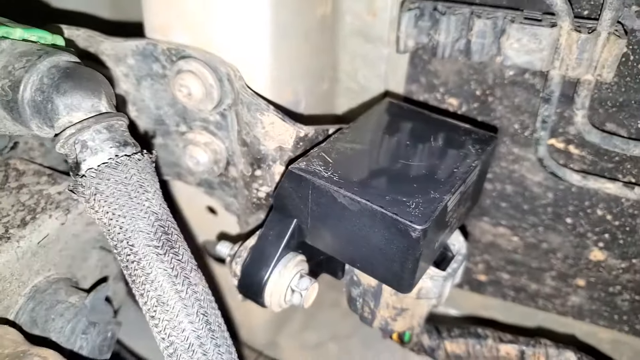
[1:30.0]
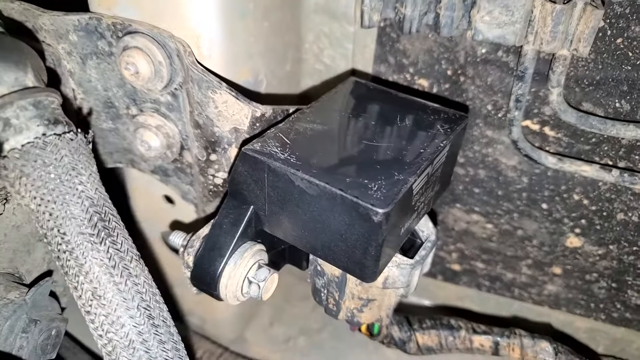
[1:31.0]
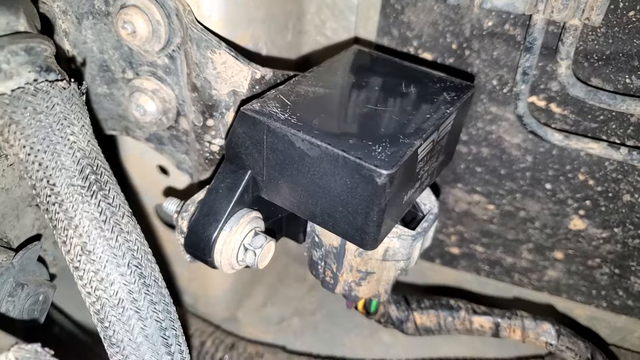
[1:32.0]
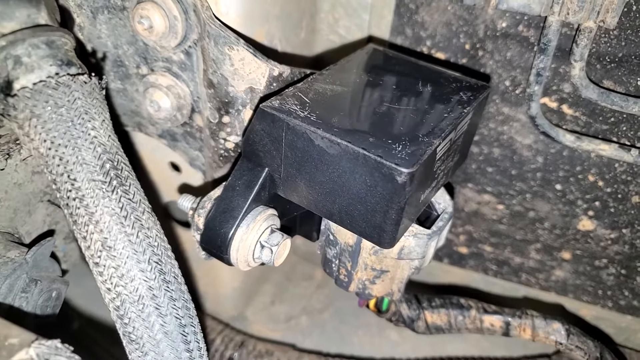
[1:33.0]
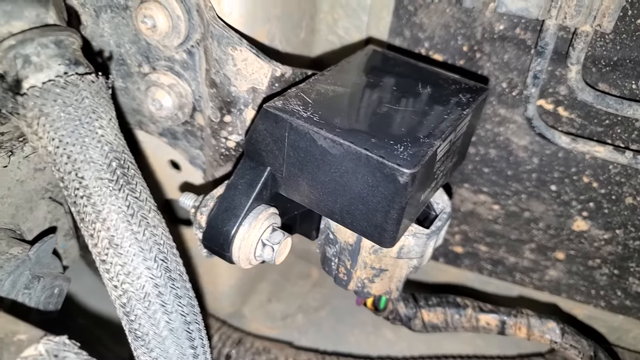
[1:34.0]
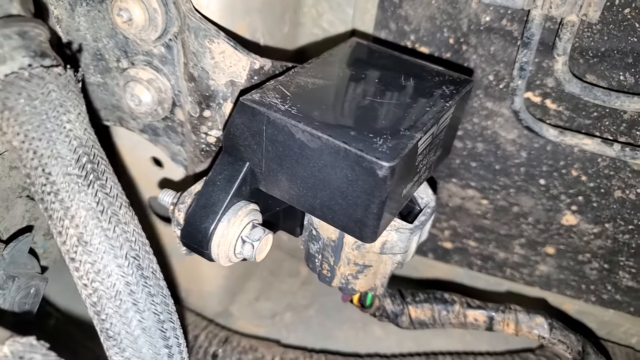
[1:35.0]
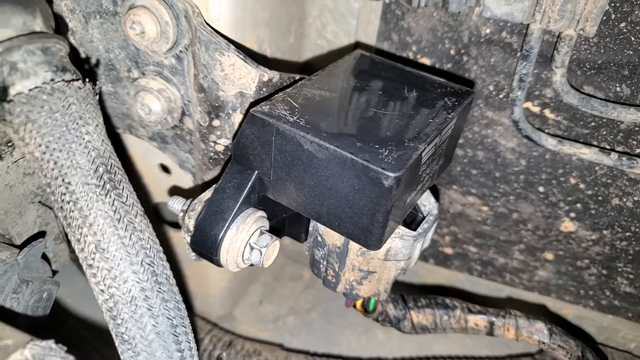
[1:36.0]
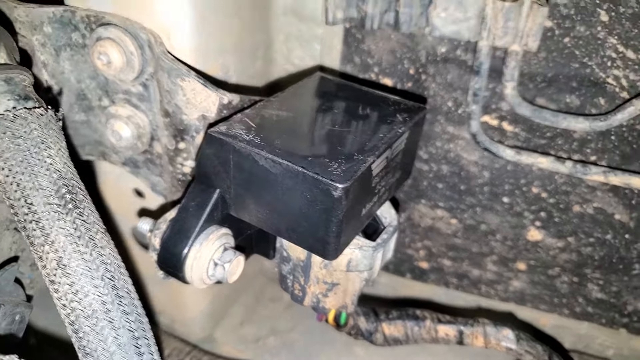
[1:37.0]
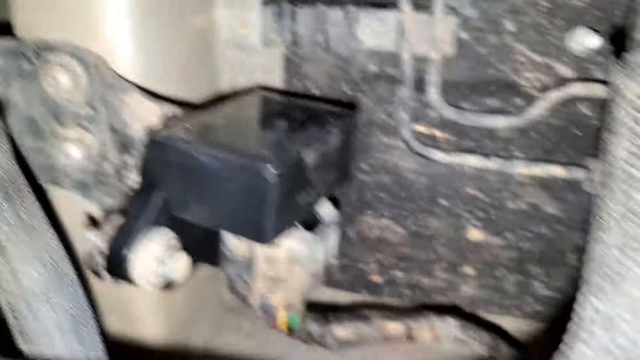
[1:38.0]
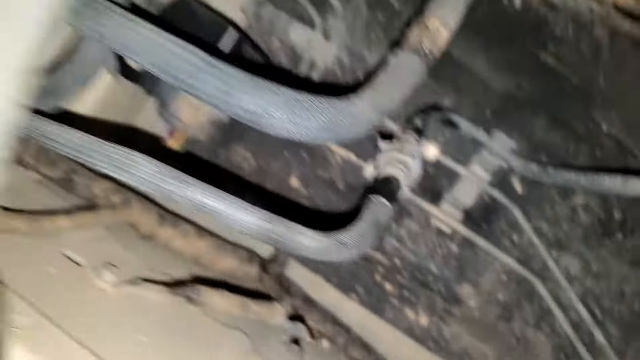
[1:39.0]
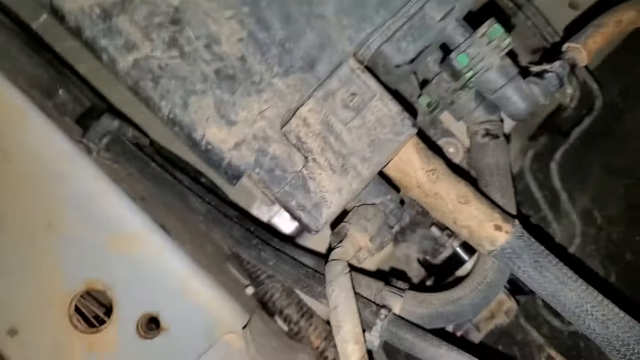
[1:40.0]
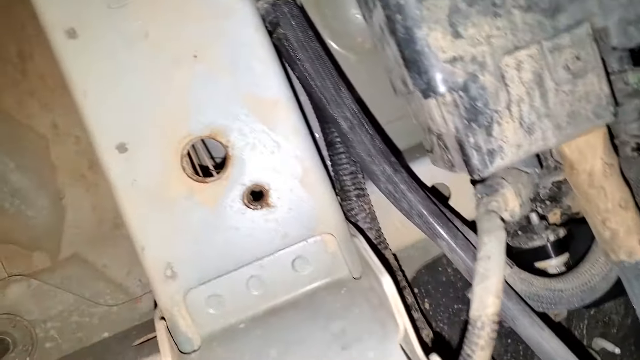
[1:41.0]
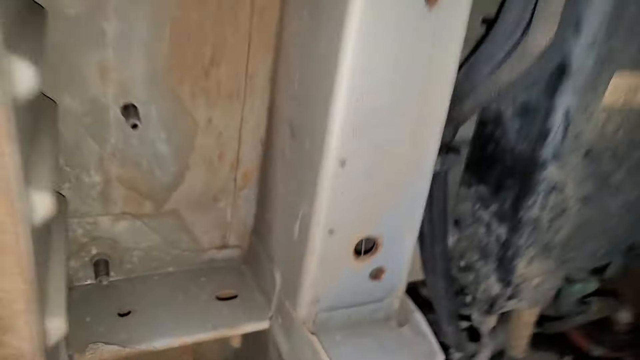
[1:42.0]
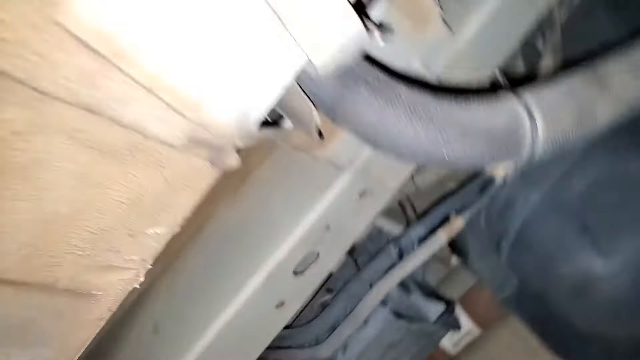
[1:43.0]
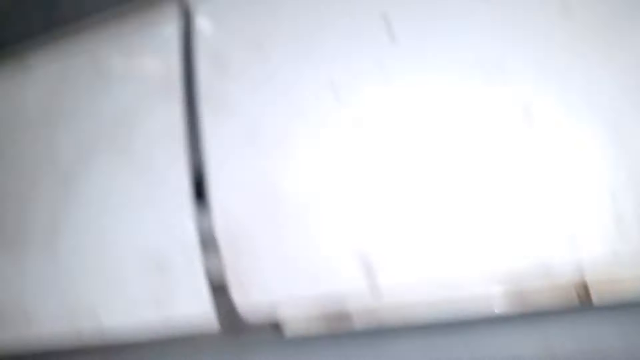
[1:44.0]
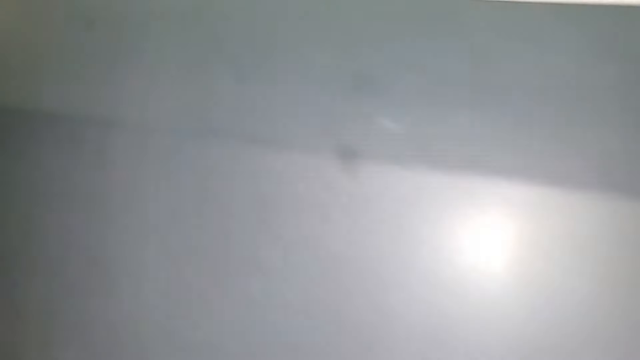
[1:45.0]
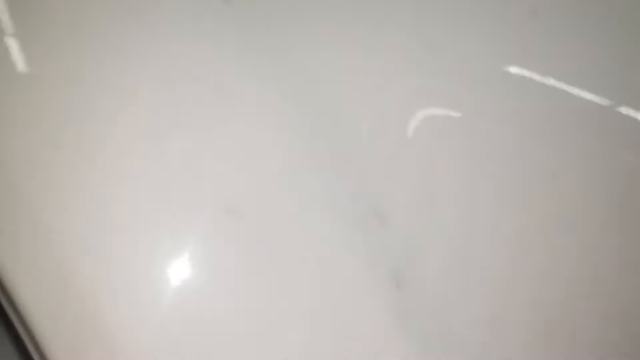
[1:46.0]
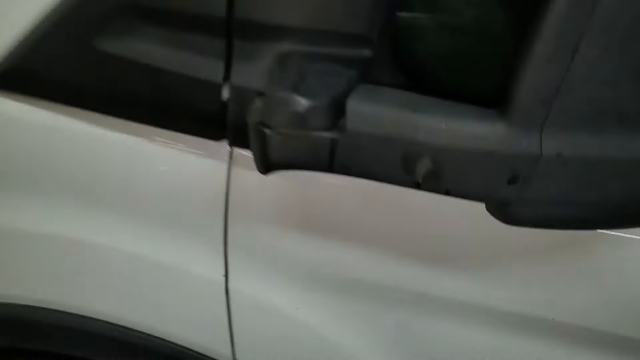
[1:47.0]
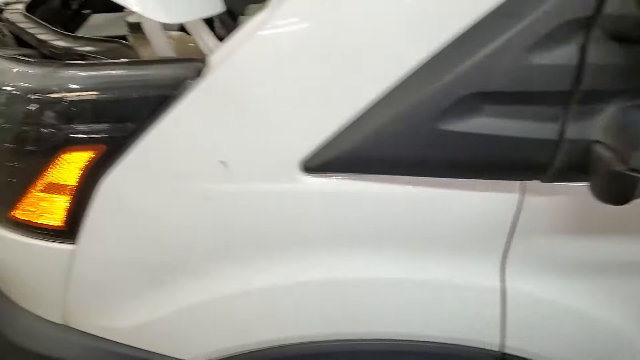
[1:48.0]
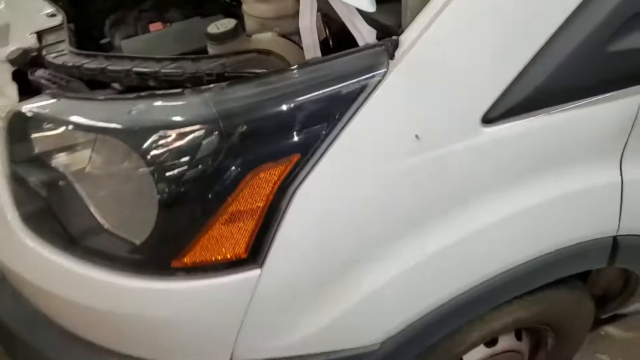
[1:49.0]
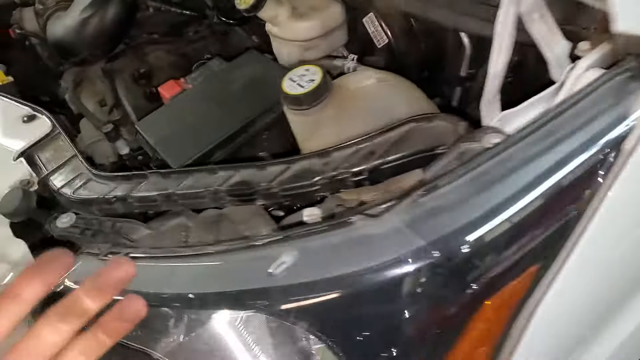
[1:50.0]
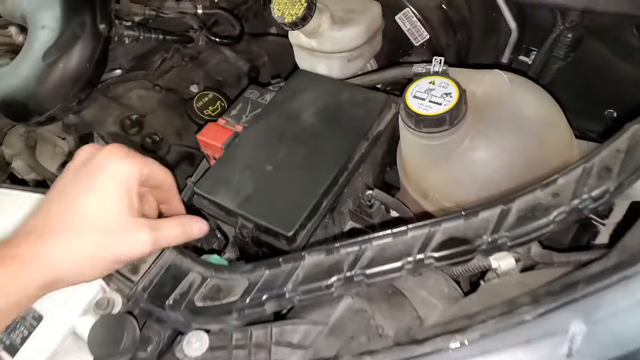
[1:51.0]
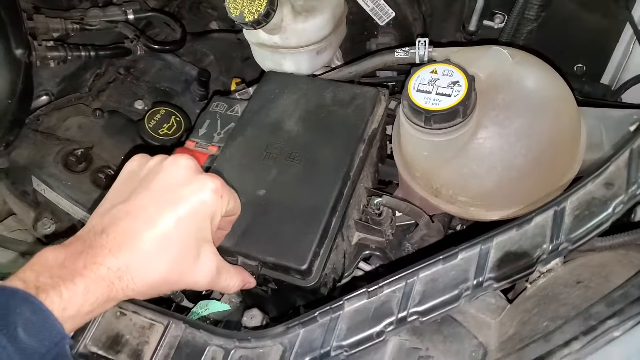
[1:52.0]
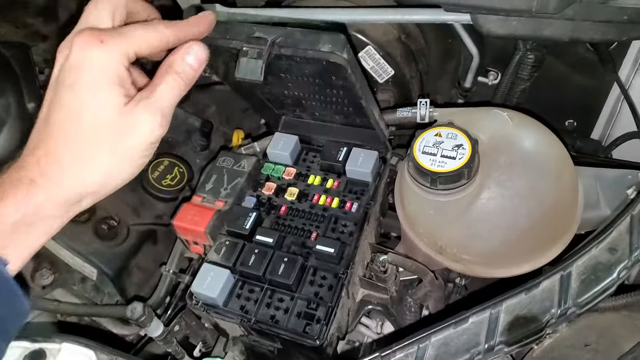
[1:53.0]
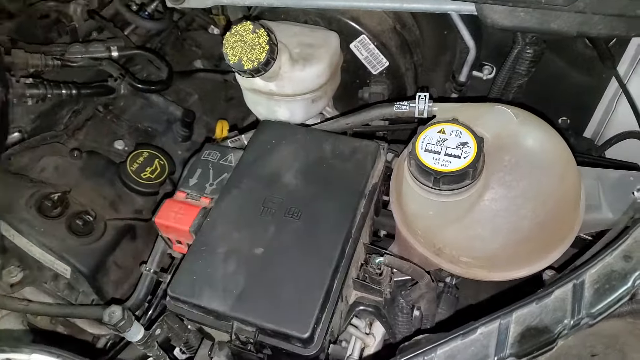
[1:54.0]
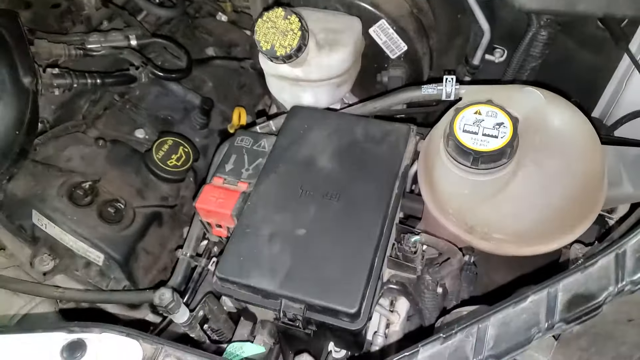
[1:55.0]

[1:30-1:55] The camera looks at a rectangular black plastic piece attached with a screw to paint- or dirt-covered metal; the screw also has what looks to be white paint and some dirt on it. After a few moments, the camera withdraws and scans over other parts, such as dirt-covered fabric hoses and other electrical parts of the vehicle, along with what looks to be a black plastic hose, other dirt-covered parts, and some areas that look to be covered in rust. Toward the end, the view extends out from underneath the vehicle and shows the bottom gray and white trim of the vehicle's body. The white painted vehicle is seen from the driver's side as the view heads toward the front hood area. The hood is open, showing the interior underneath. A person uses their left hand to flip open the black rectangular lid of a compartment under the hood, revealing some of the multicolor buttons underneath, and then flips the lid back down with their left hand.